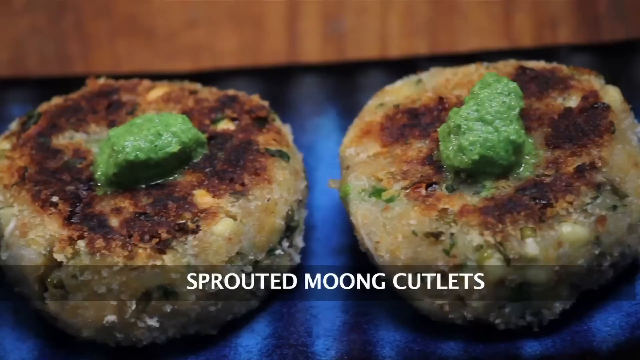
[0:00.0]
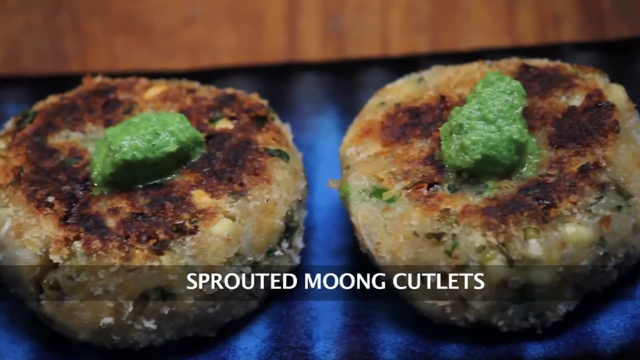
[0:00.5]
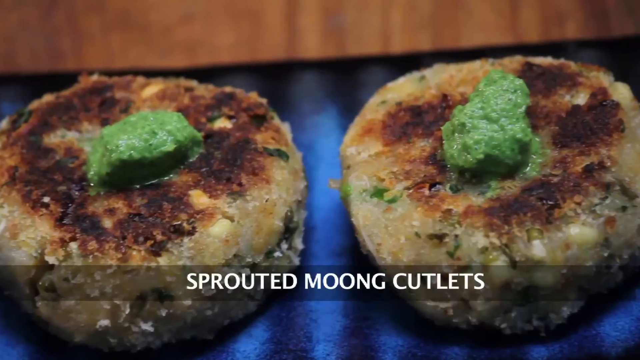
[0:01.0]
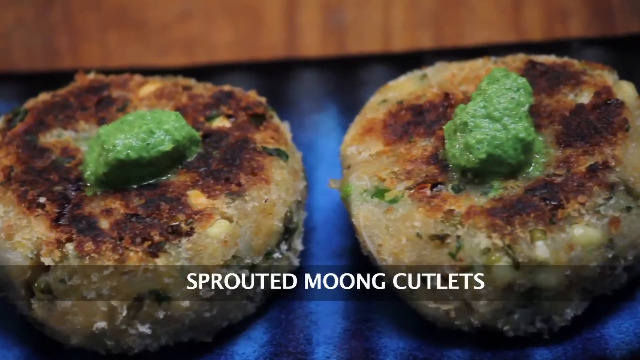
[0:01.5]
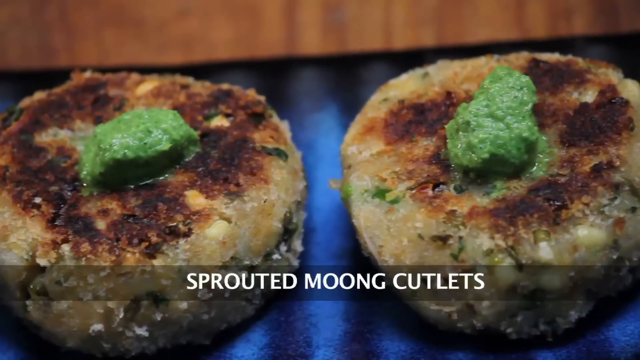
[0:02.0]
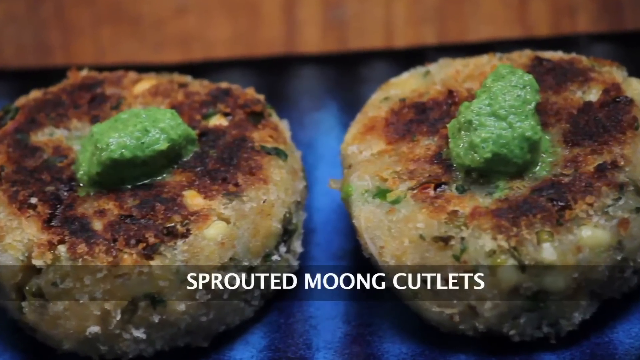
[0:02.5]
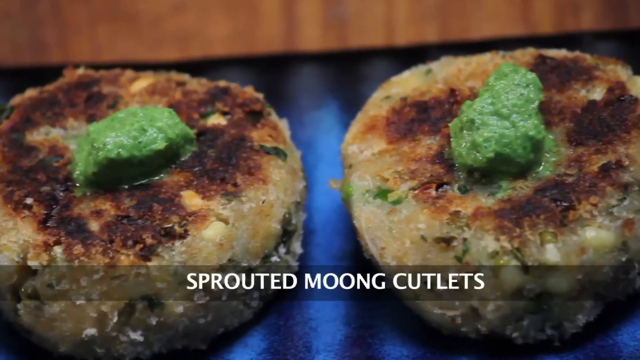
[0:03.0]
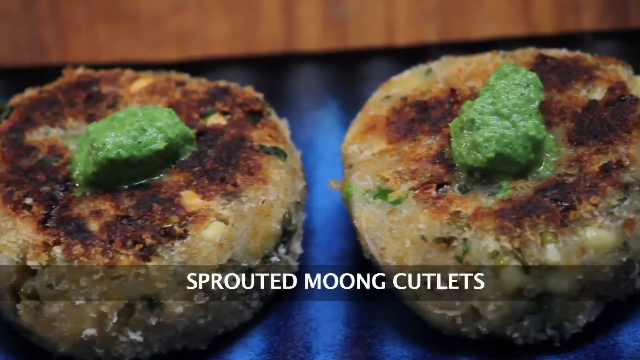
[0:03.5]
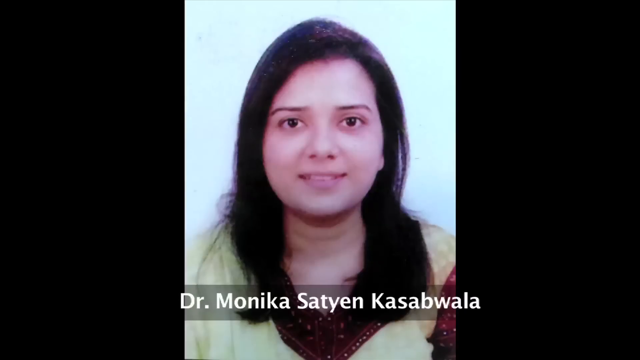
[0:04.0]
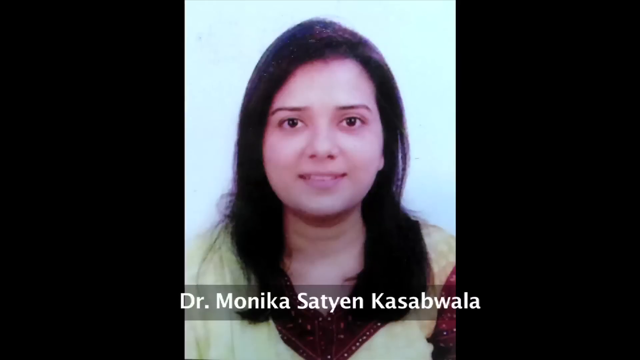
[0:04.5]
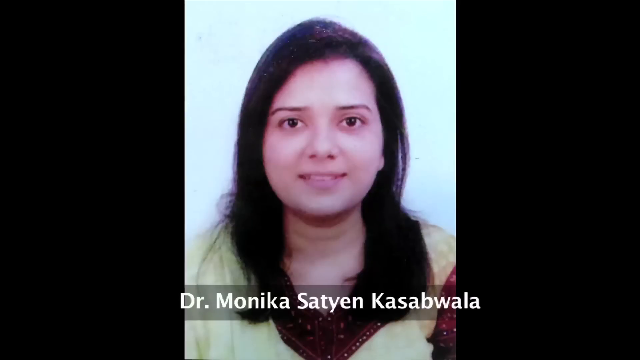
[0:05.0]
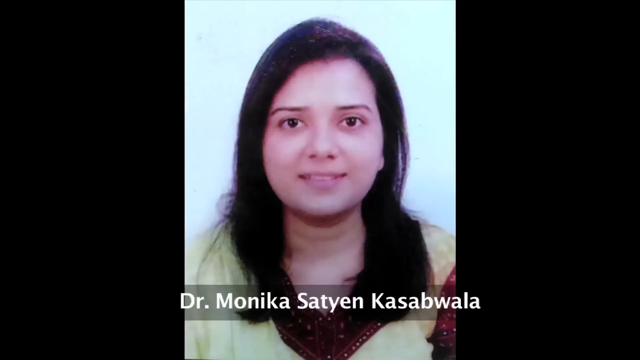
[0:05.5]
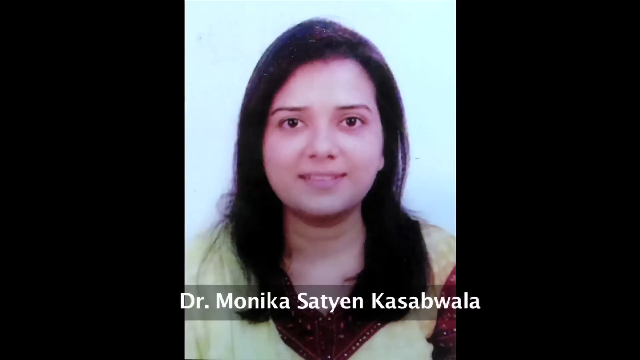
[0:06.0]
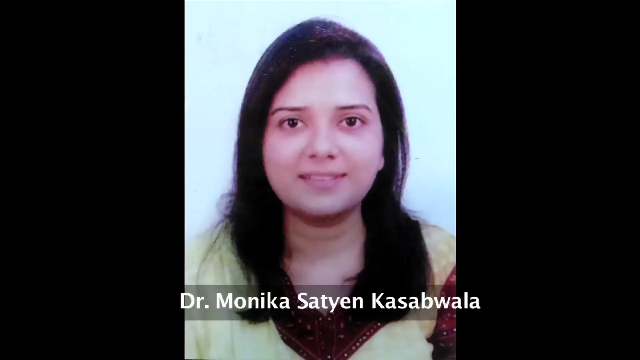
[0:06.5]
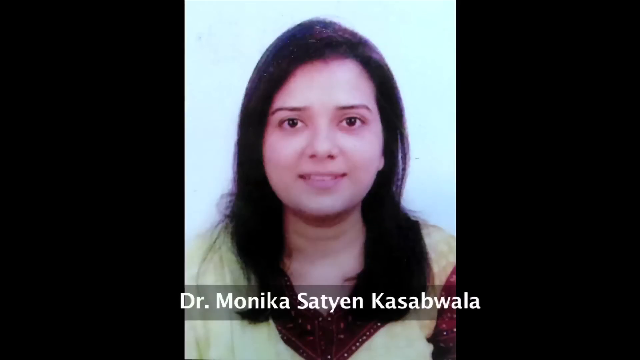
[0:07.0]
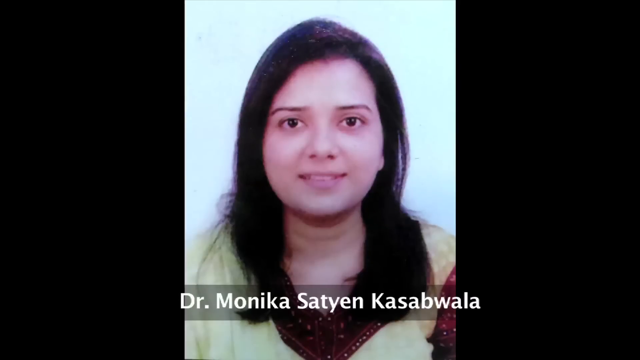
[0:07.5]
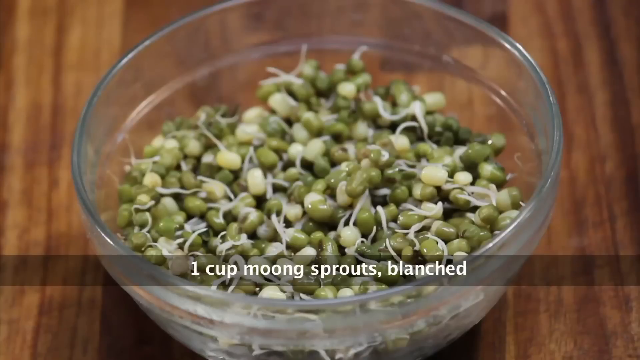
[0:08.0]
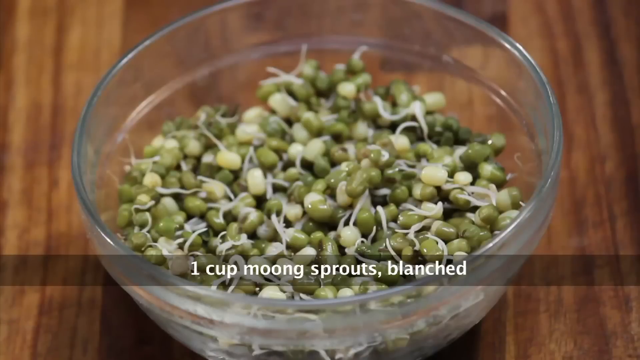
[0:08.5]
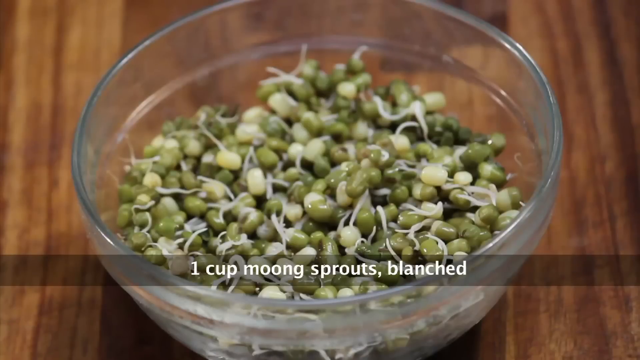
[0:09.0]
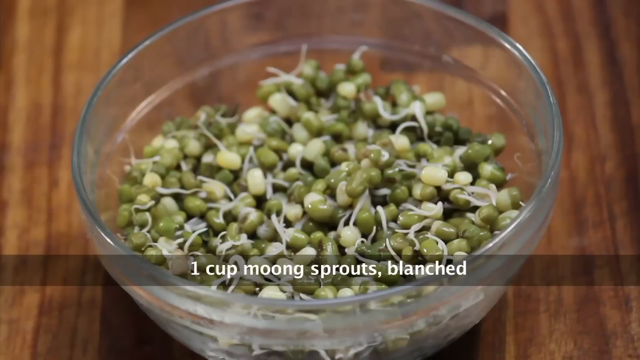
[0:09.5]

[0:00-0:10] The video opens on sprouted moon cutlets: two round circles, each with a dab of green on it. A picture of Dr. Monica Satyen Kasawala follows; she has long, dark hair and looks like she is probably Asian. The view then pans to a bowl of sprouts, with text reading "one cup of moon sprouts", and the sprouts are shown blanched in a glass bowl. The video returns to the cutlets, which look deep fried but apparently are not; there is a dab of green on top of them.